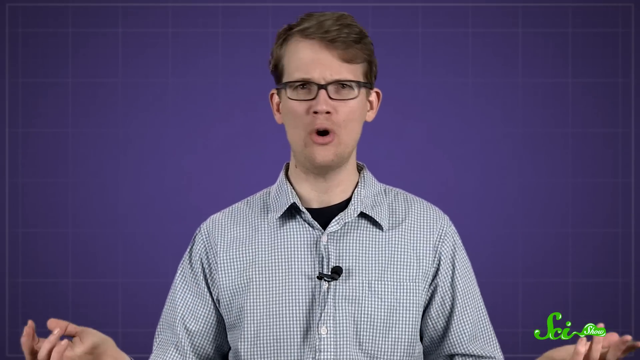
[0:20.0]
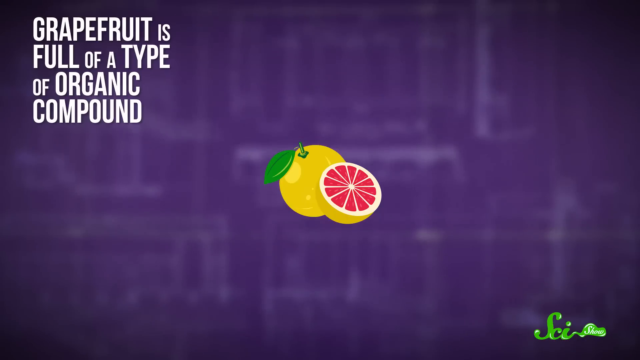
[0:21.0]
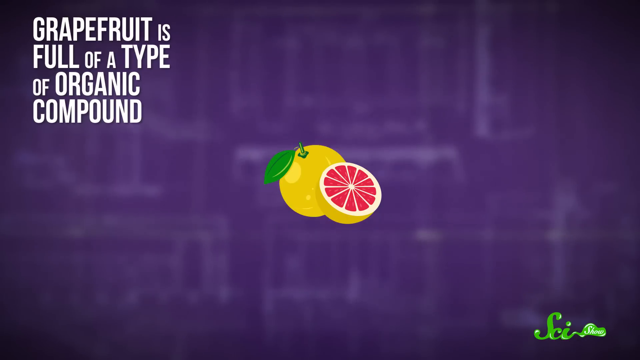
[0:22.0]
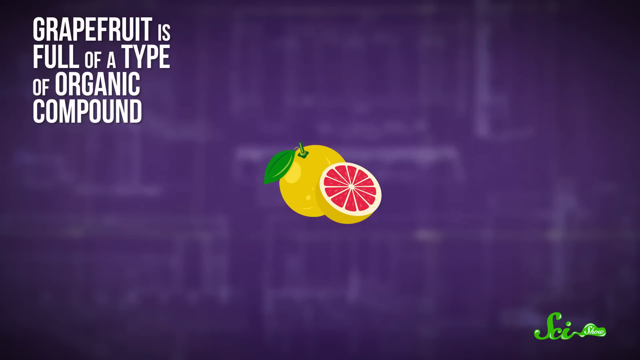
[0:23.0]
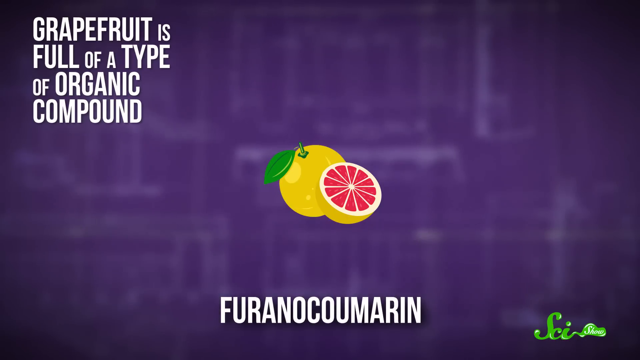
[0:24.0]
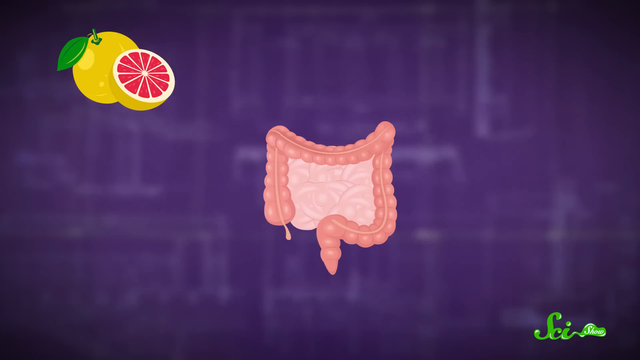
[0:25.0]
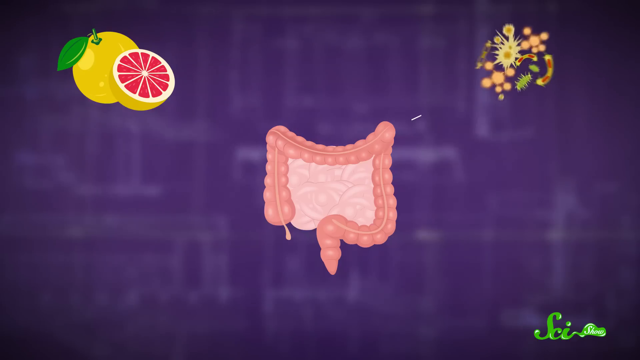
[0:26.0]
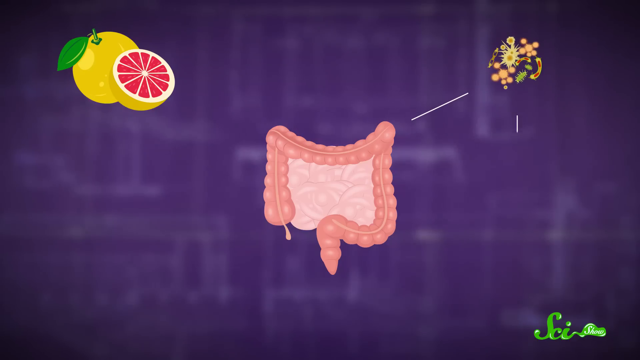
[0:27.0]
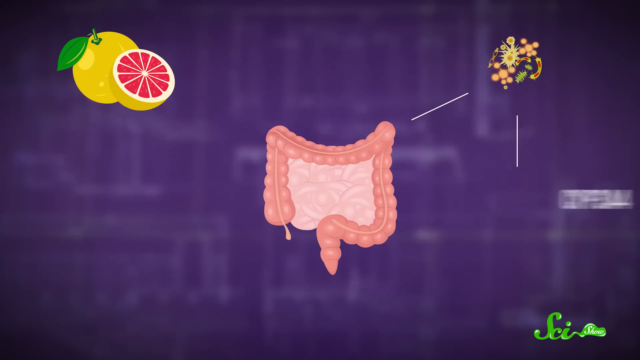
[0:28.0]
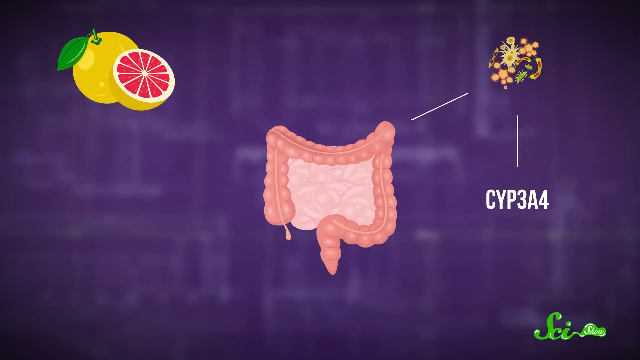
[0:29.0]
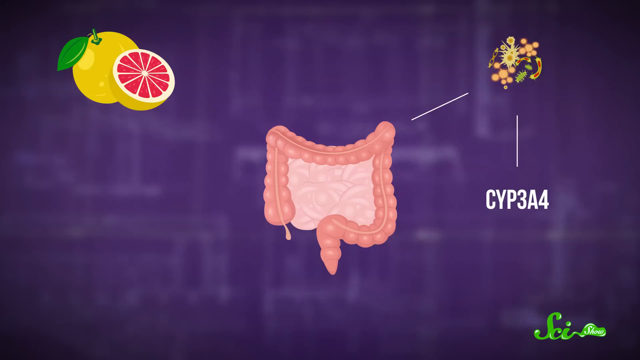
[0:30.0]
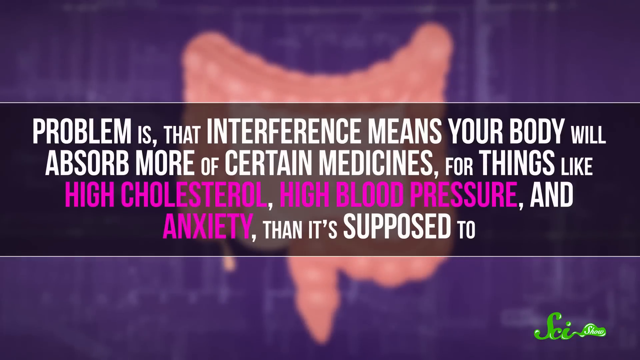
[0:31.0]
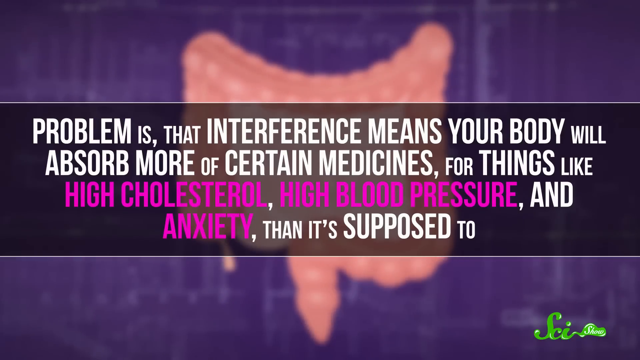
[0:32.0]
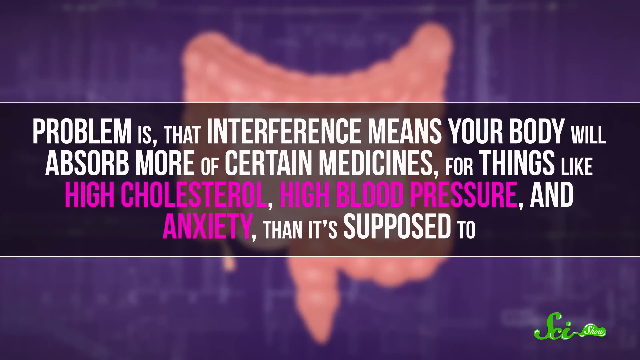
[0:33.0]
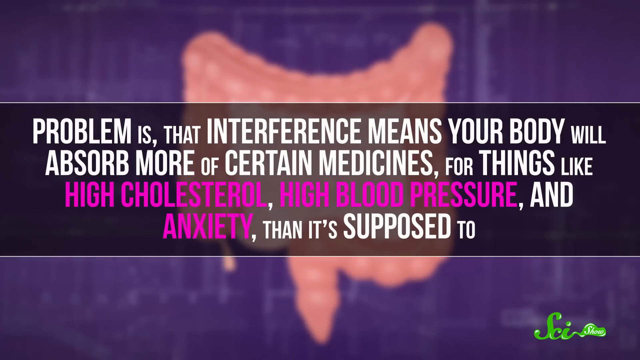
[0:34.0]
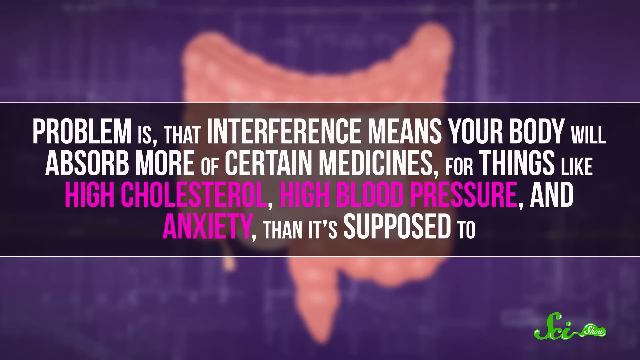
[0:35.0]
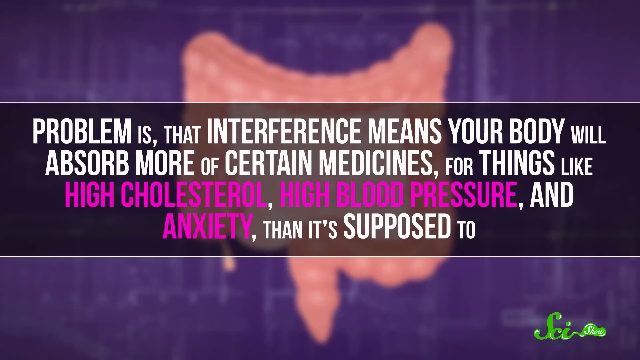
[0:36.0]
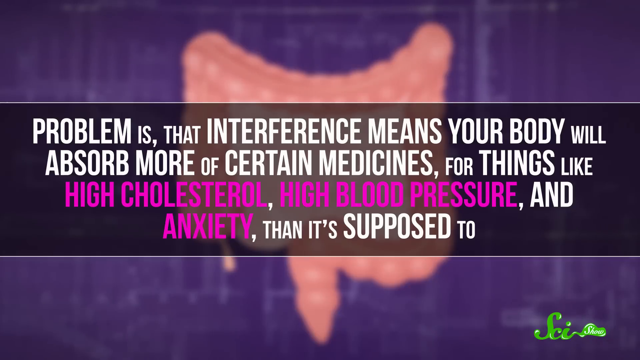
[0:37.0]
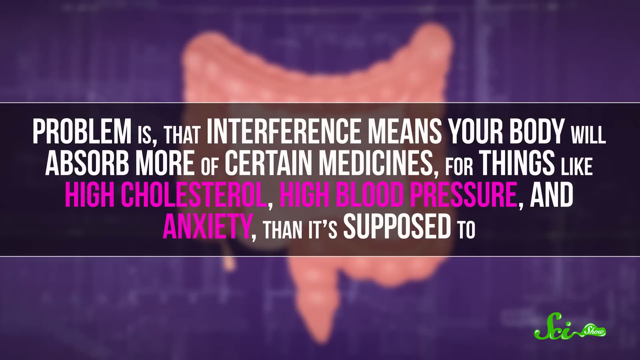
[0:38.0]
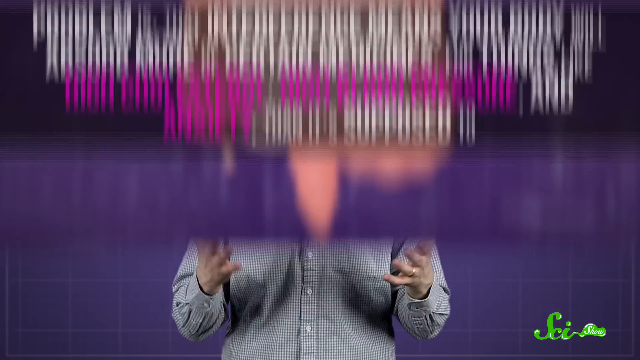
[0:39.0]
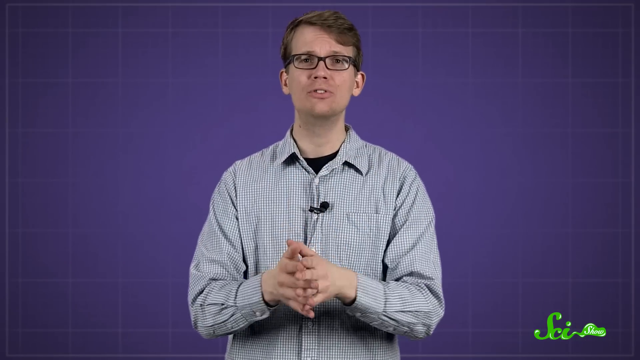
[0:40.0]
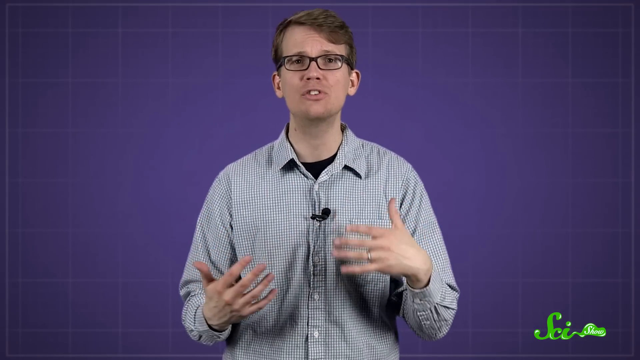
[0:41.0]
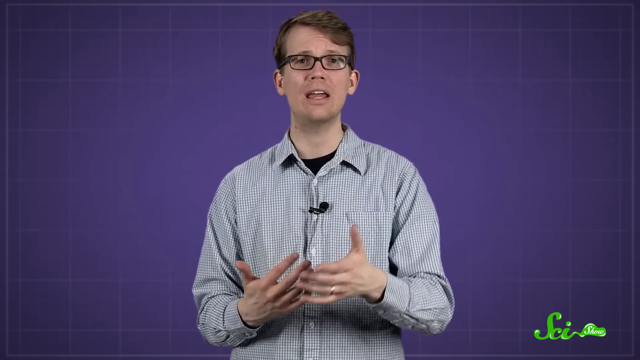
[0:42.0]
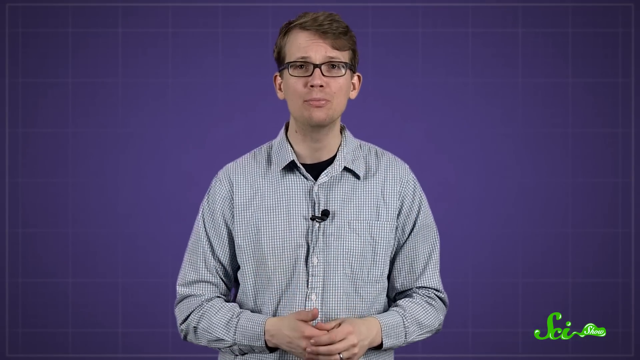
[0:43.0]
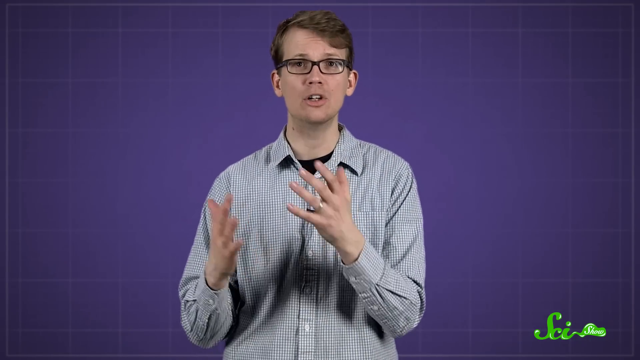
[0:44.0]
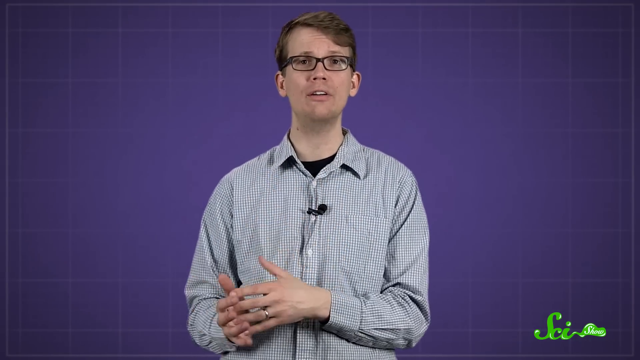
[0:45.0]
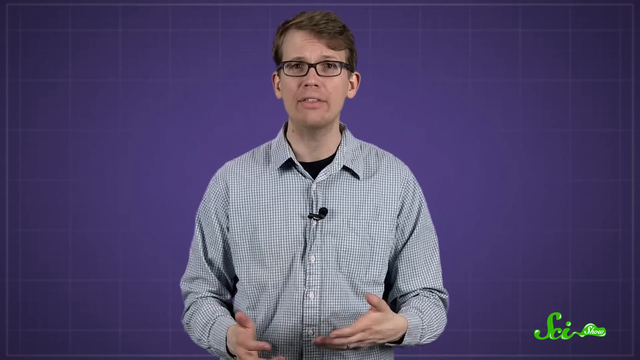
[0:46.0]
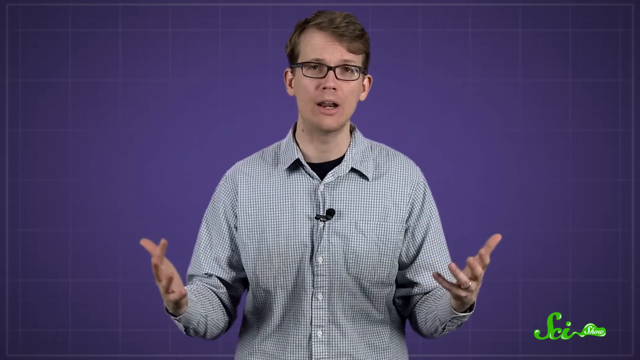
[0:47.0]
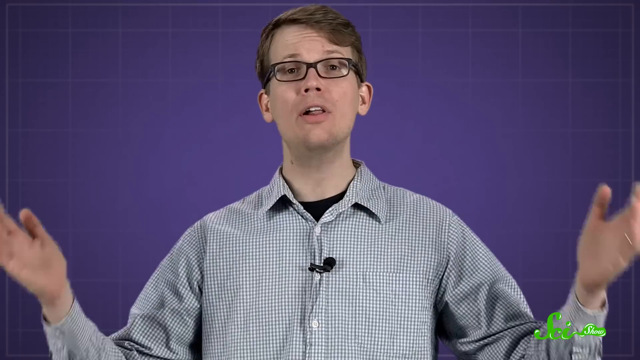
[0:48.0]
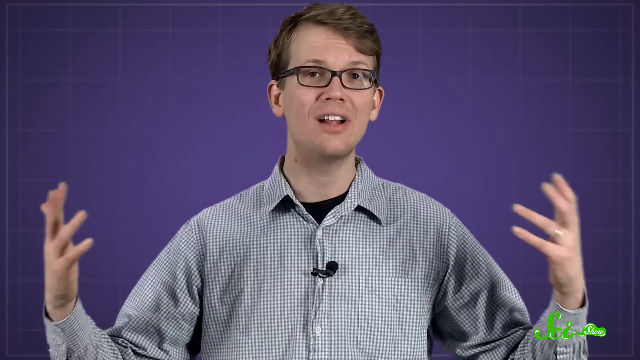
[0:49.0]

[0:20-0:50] The man talks to the camera. His hair is combed back and parted to the side, and he wears glasses, a button-down shirt with a pattern of tiny squares outlined in a bluish color, a black t-shirt underneath, and a lapel pin microphone. Text appears on screen saying "grapefruit is full of a type of organic compound", and the compound's name is spelled out: f-u-r-o-n-i-c-o-c-o-m-a-r-o-n. A picture of a yellow grapefruit with a leaf appears, along with half a grapefruit showing the pink pieces inside. A digestive system then appears with the small colon visible. A line pops up at the top left, and a little spark, almost like a firecracker, appears, possibly representing something bacterial or acidic. Another line then goes down.